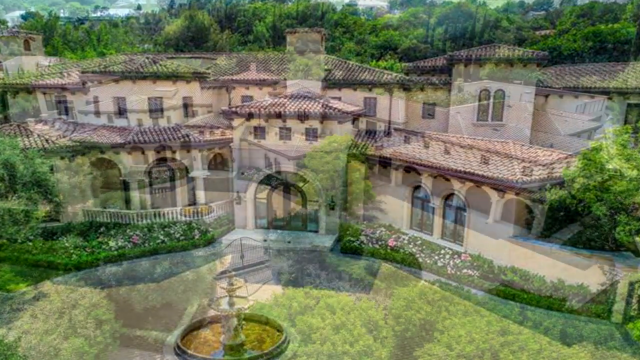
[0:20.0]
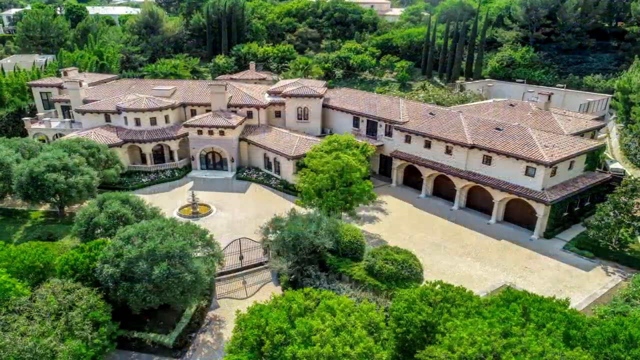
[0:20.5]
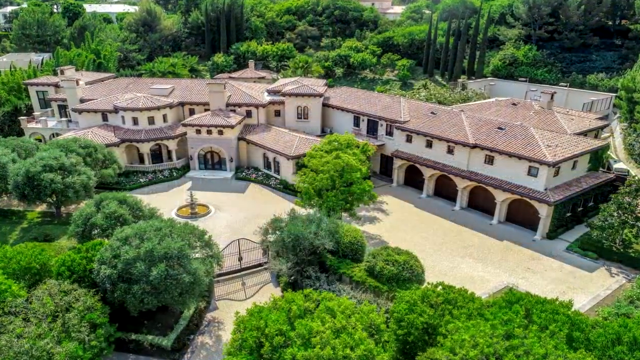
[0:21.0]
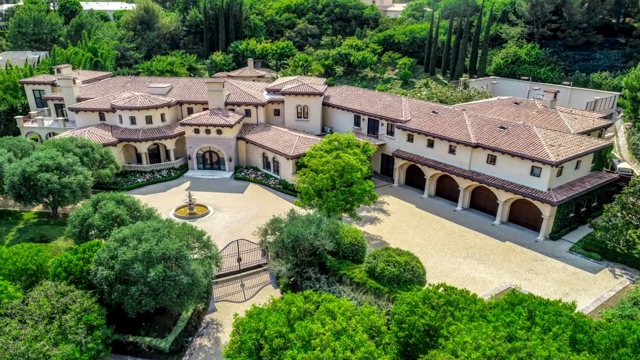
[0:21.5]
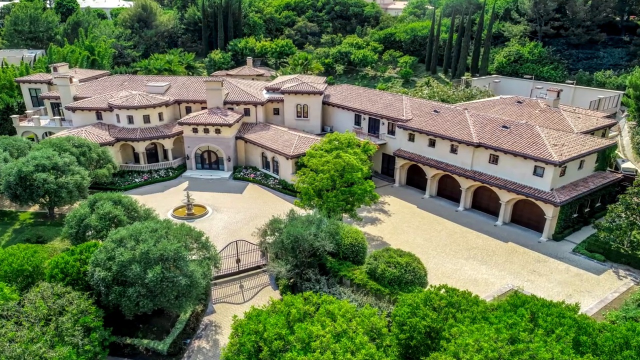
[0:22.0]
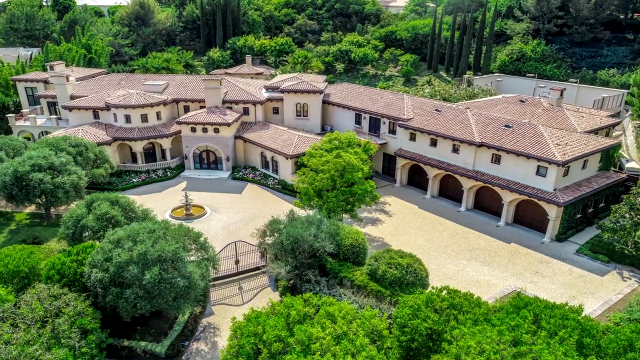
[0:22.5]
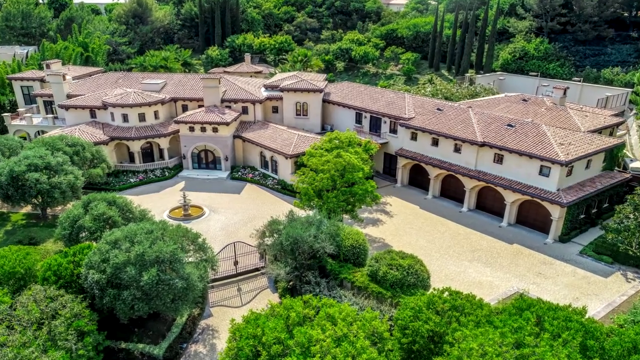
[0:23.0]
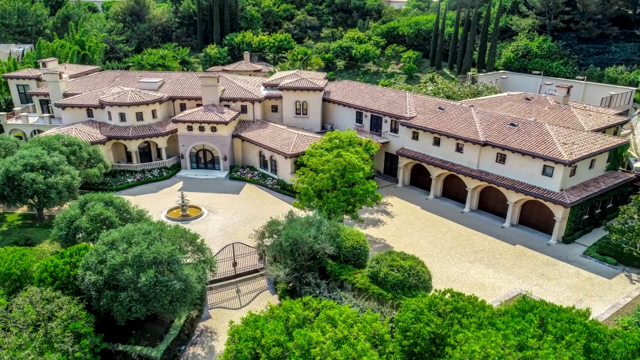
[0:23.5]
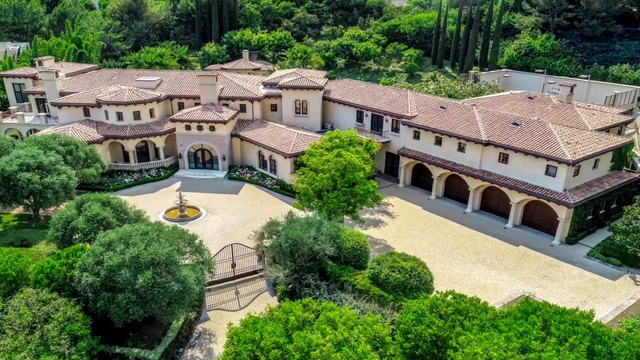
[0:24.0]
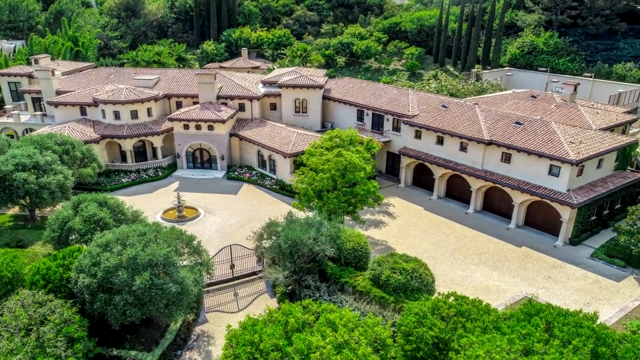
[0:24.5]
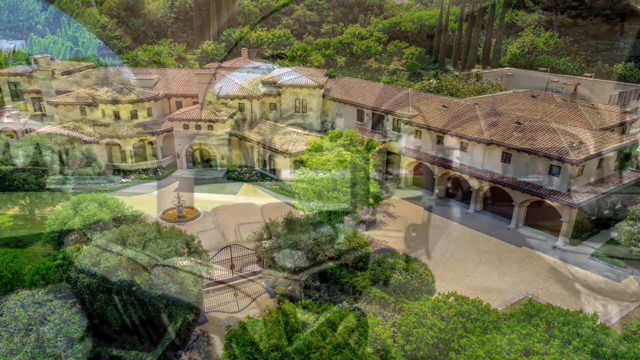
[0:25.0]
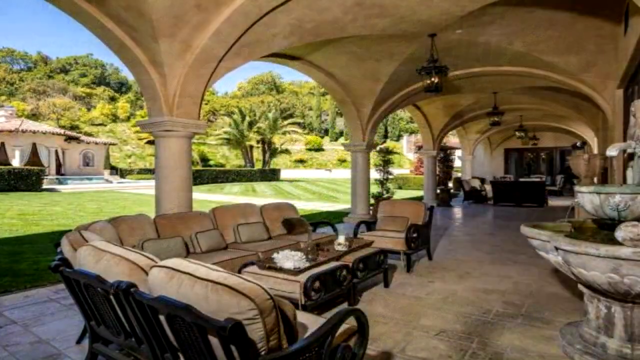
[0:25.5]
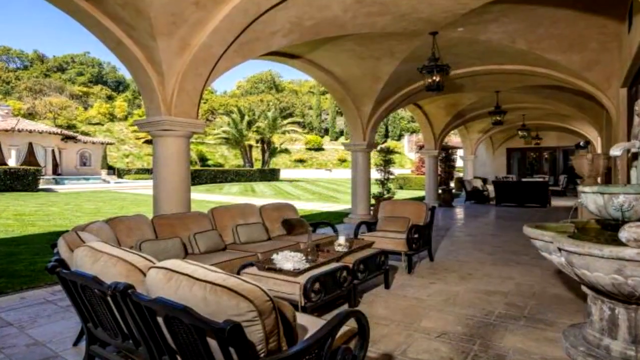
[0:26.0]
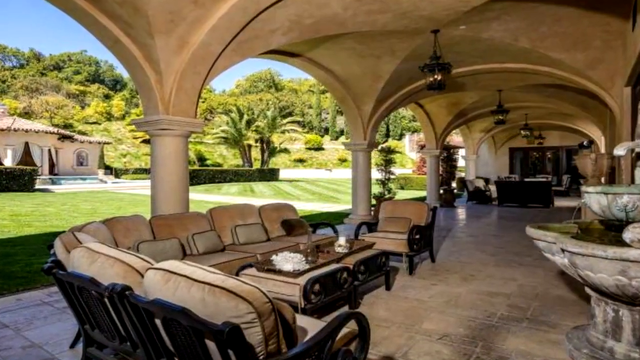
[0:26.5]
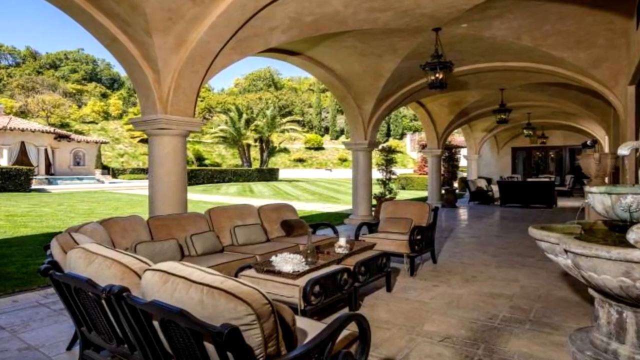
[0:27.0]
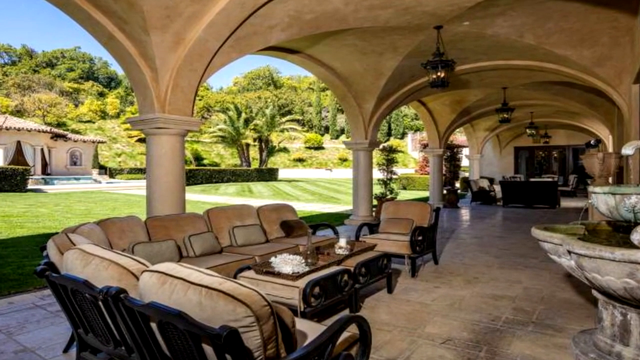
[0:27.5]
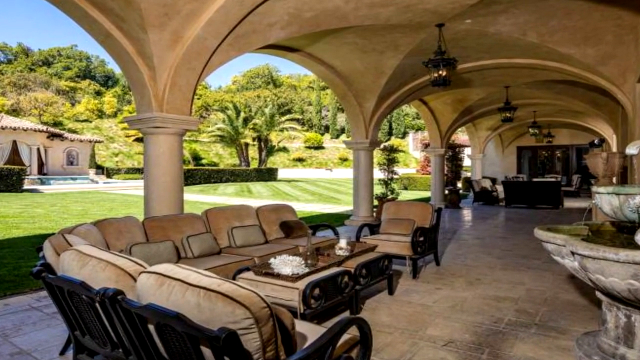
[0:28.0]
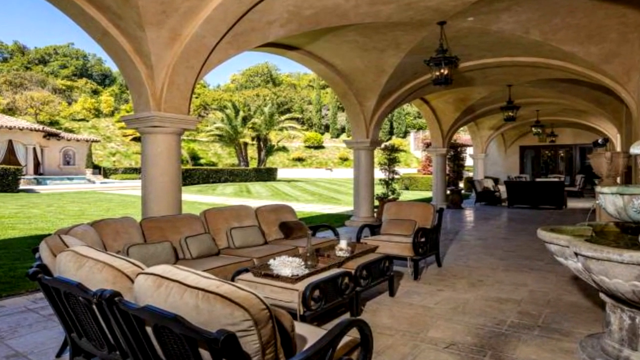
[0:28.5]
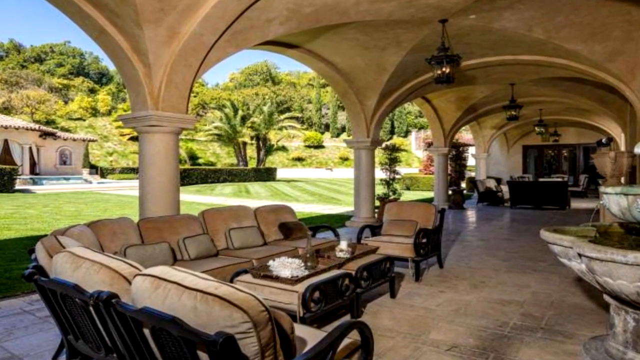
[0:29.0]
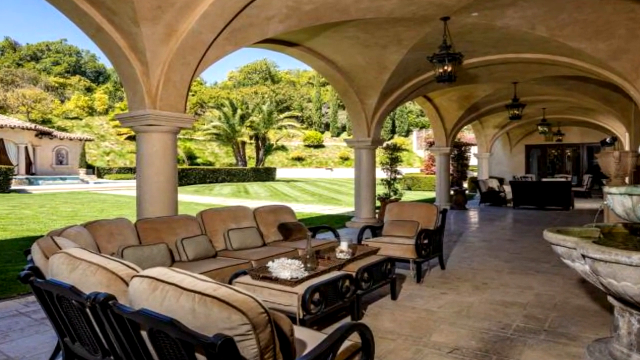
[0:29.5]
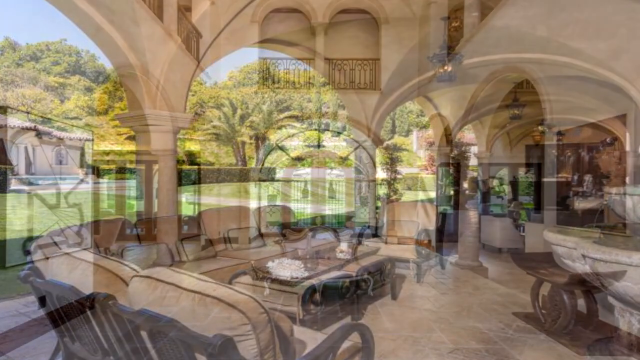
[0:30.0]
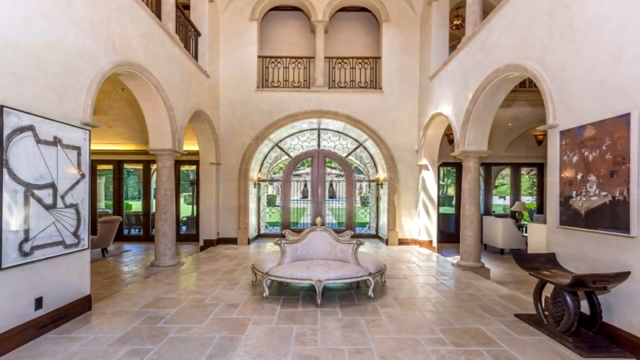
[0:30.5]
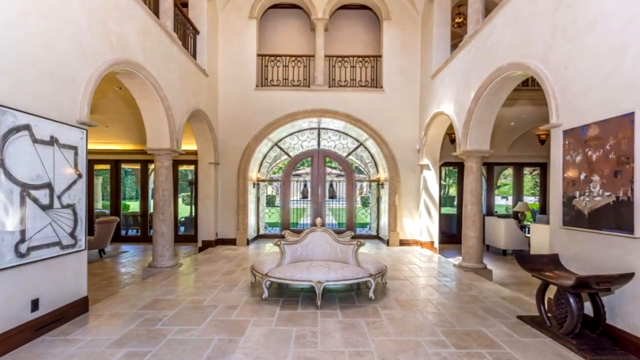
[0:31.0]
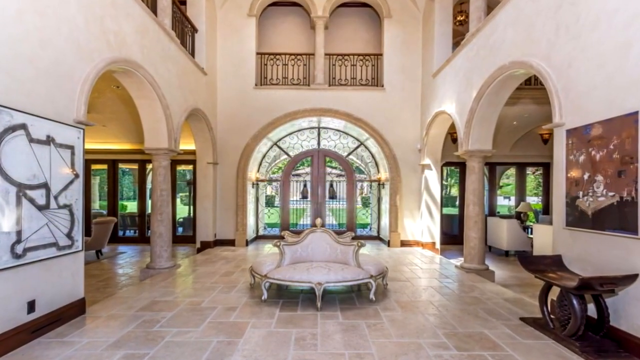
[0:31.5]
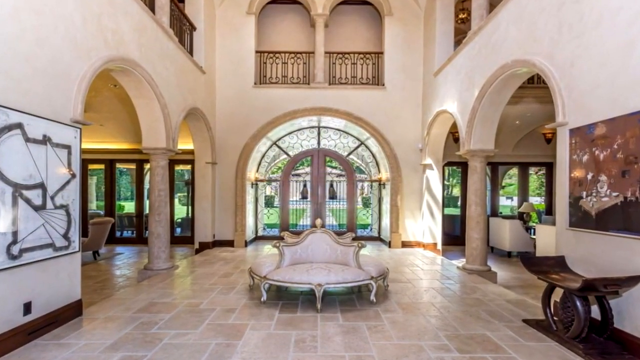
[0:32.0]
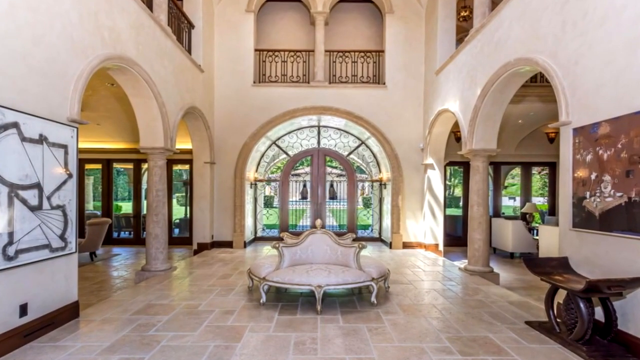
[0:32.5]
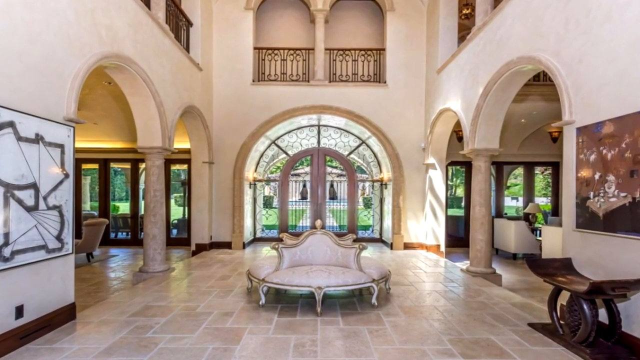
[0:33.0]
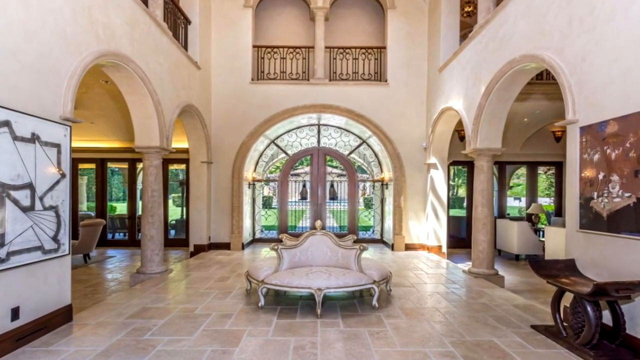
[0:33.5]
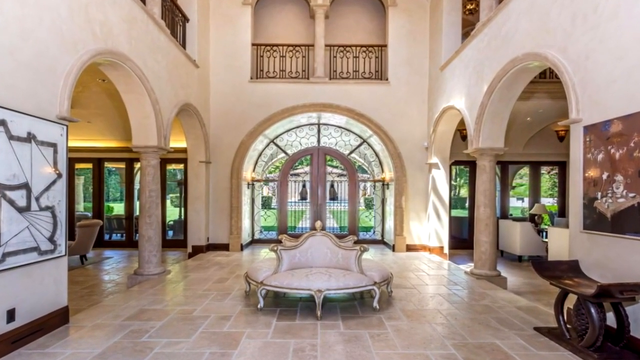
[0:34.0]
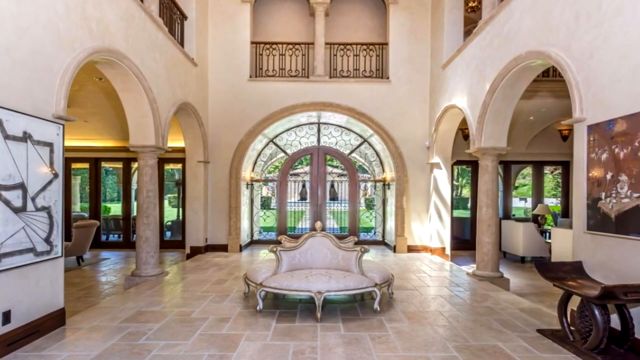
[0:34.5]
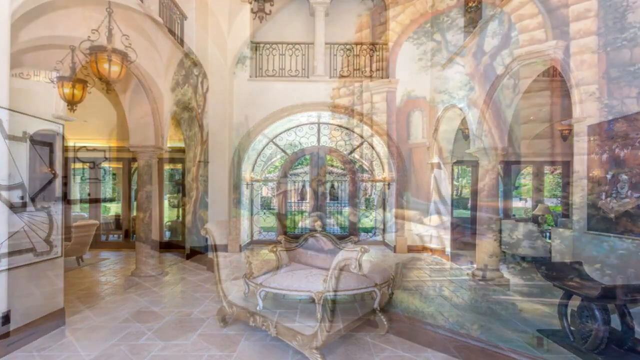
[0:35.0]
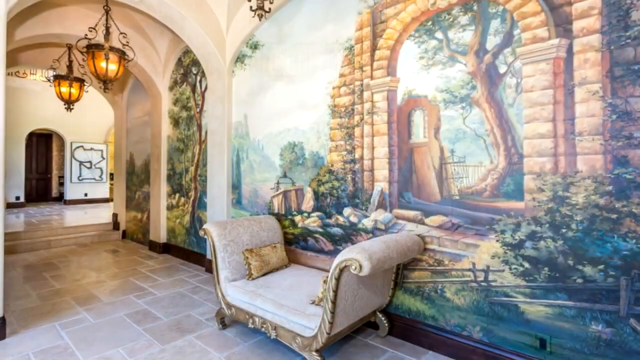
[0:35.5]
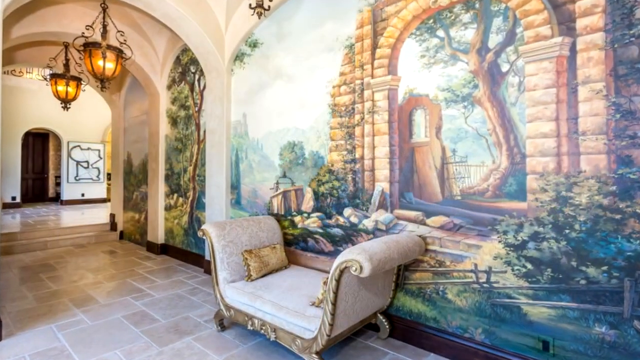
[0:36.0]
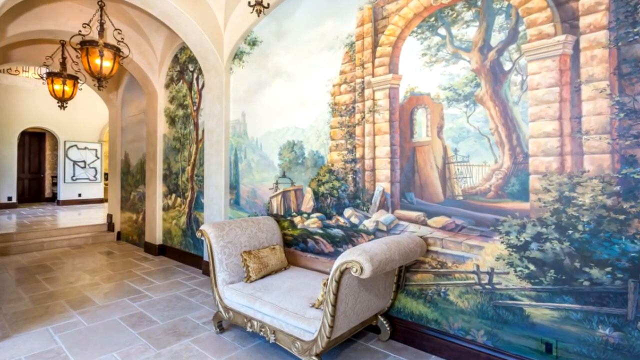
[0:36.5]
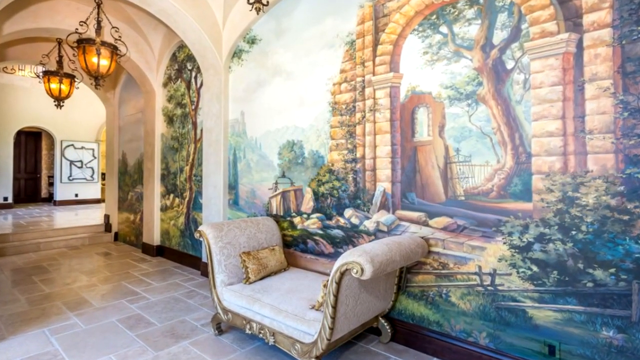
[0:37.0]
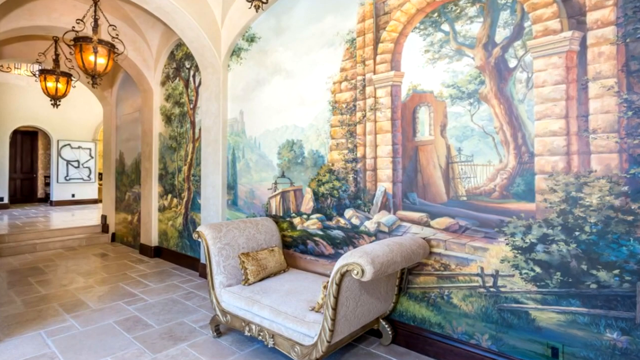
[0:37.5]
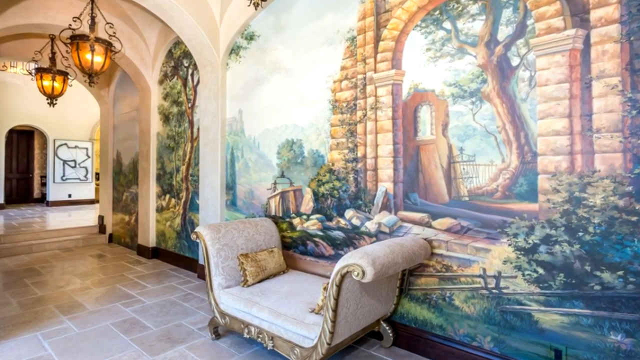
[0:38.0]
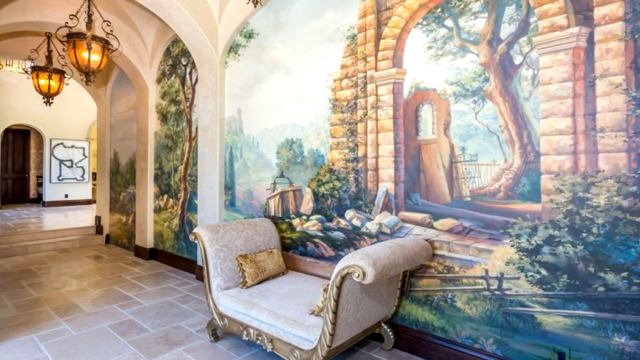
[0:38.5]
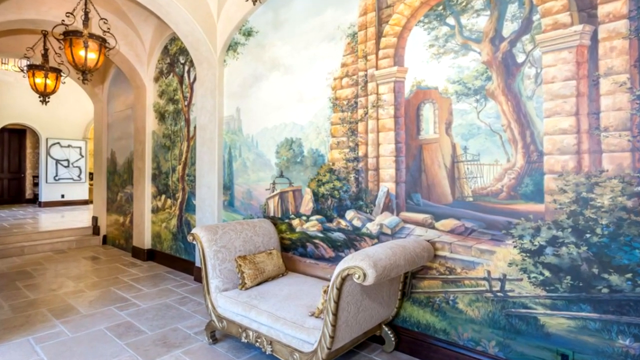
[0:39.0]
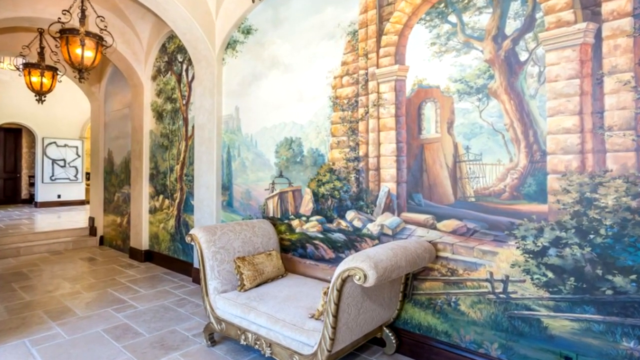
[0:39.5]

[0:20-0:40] An aerial view shows the villa, which has multiple sections of different heights attached to each other. On the right side of the villa are four large archways that could be openings for a garage. Multiple green trees are in front of the villa, and a small round fountain is in front of its entrance. An interior shot shows one section of the villa: about three stone archways side by side, with a stone floor inside them and couches set up around a table, and green hills and green grass in the background. Next comes what looks to be the entrance of the house. The front doors are double doors surrounded by windows, and on the inside above this door there is a balcony at the top with a metal railing, made of two side-by-side arches. The floor appears to be made of wooden squares, there are double arches on either side of the floor, and the open area has a couch in the center. Another shot shows a painting on the wall of a brick arch with green shrubbery around it and a tree in the background of the arch. In front of this painting is a tan seat whose ends curve upwards and are very high.